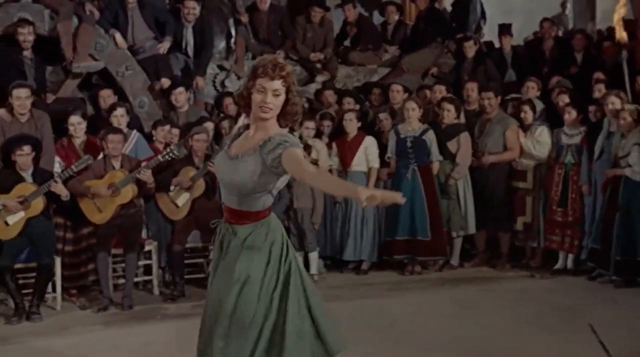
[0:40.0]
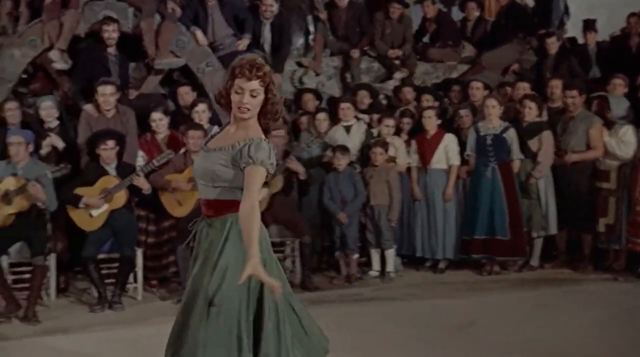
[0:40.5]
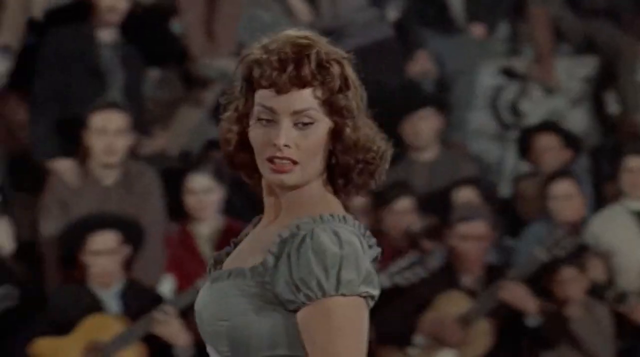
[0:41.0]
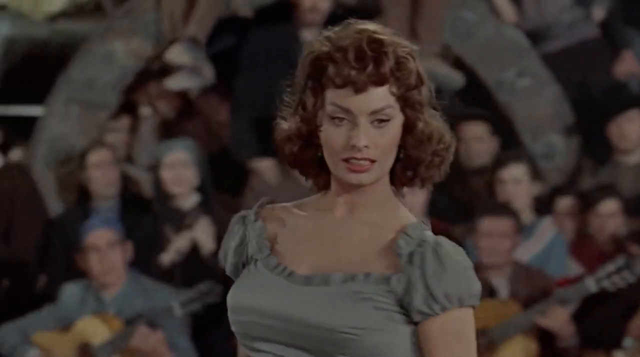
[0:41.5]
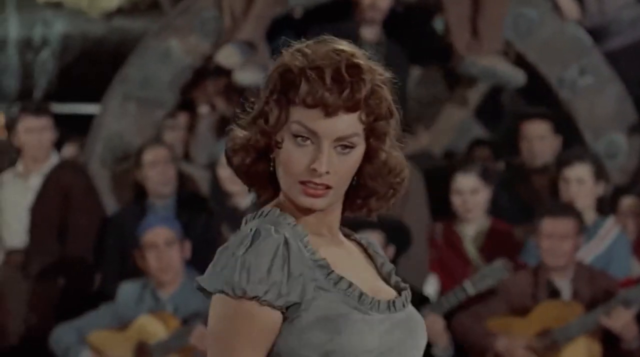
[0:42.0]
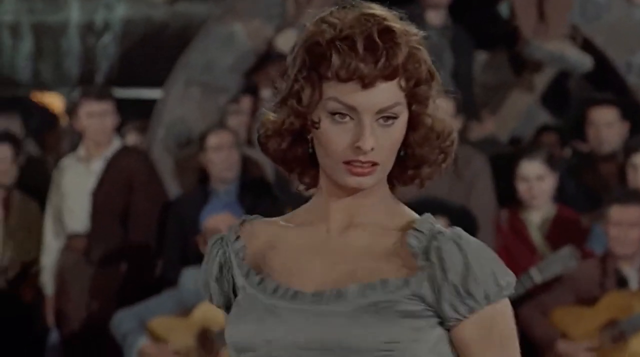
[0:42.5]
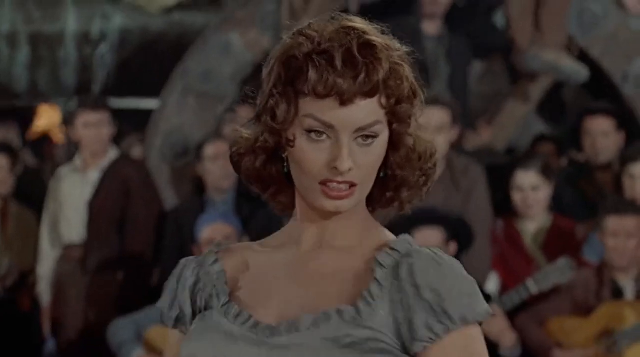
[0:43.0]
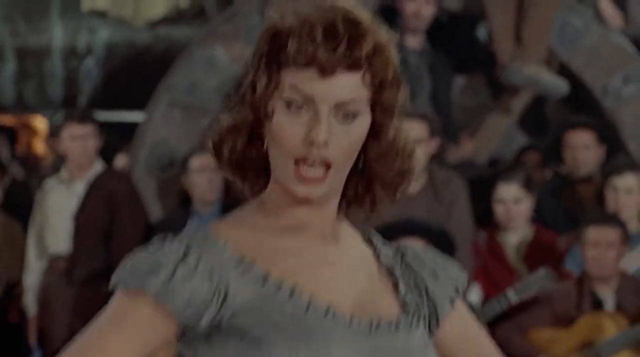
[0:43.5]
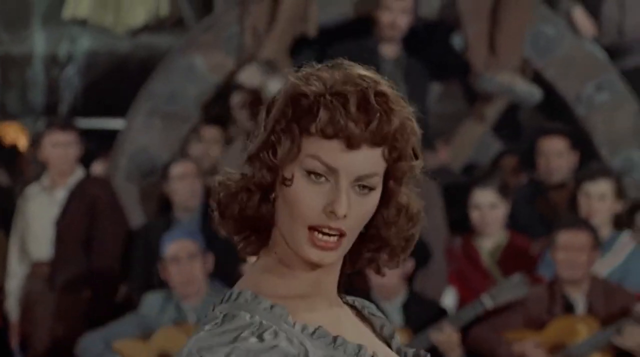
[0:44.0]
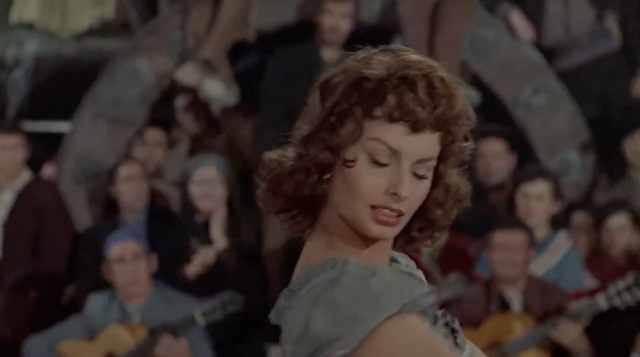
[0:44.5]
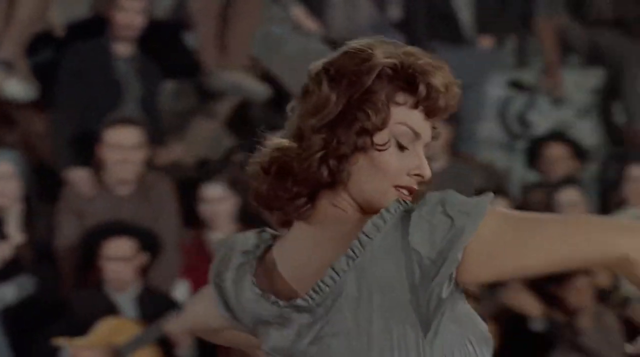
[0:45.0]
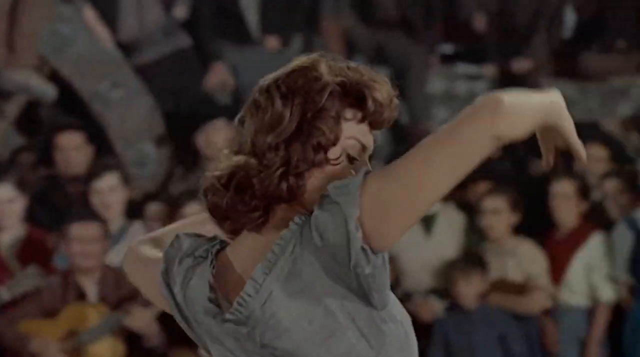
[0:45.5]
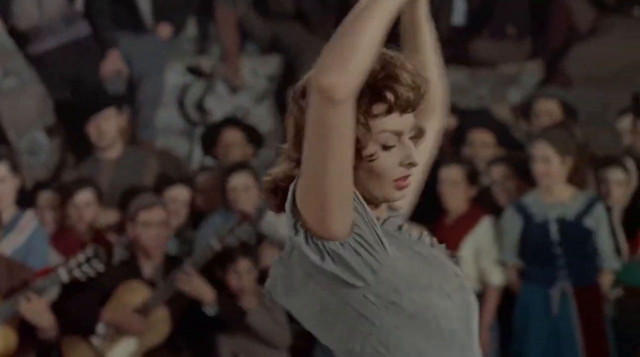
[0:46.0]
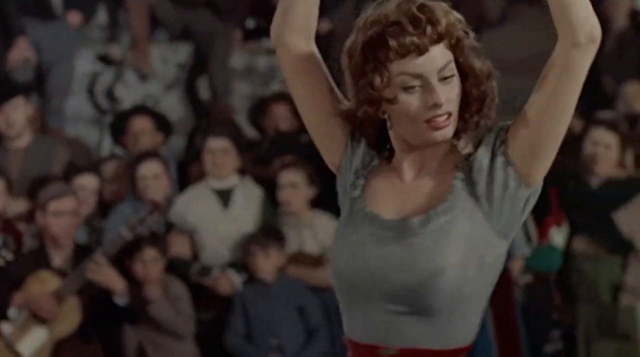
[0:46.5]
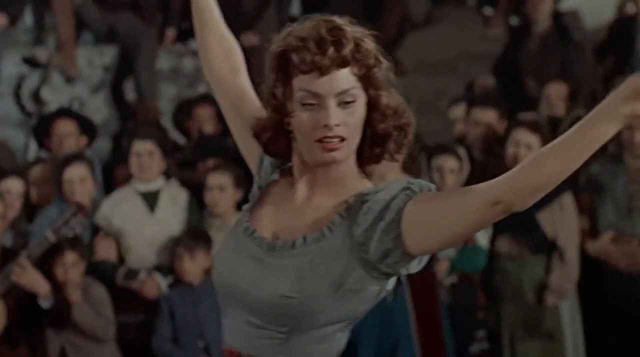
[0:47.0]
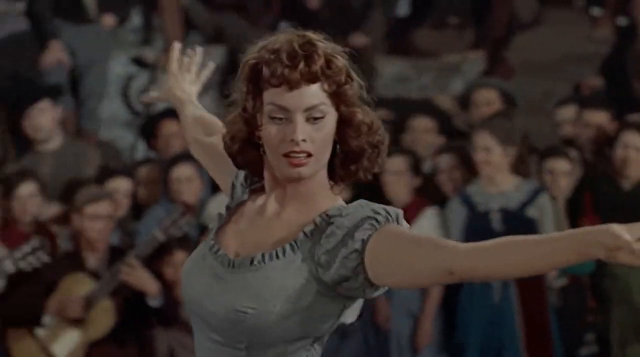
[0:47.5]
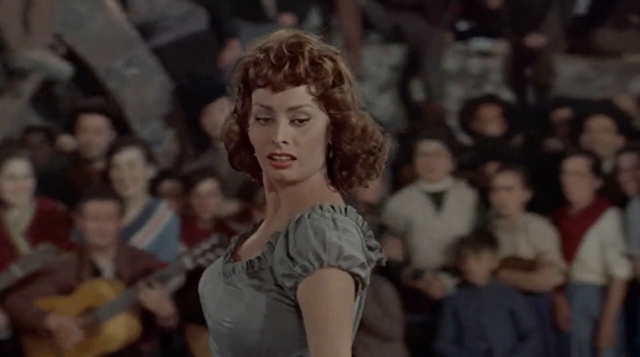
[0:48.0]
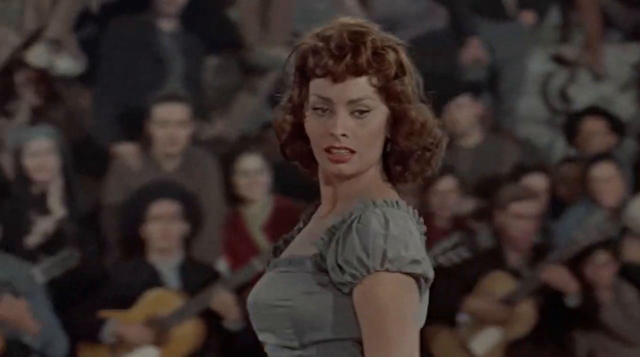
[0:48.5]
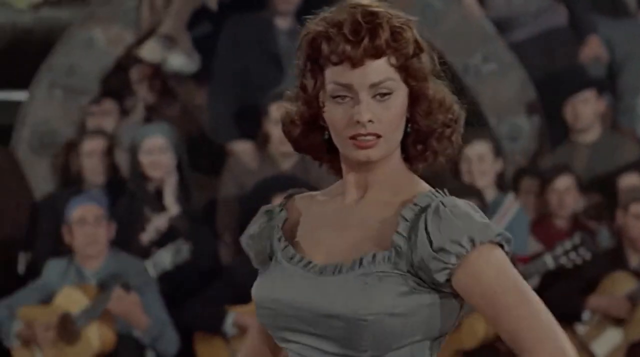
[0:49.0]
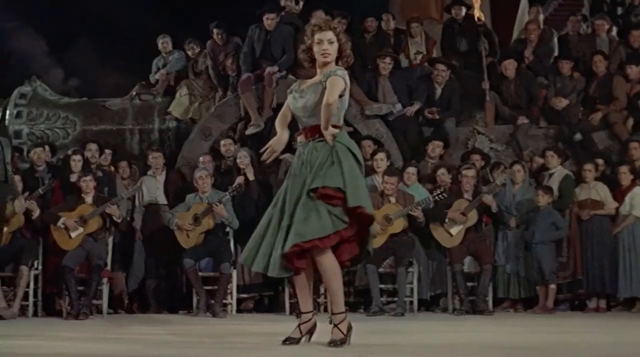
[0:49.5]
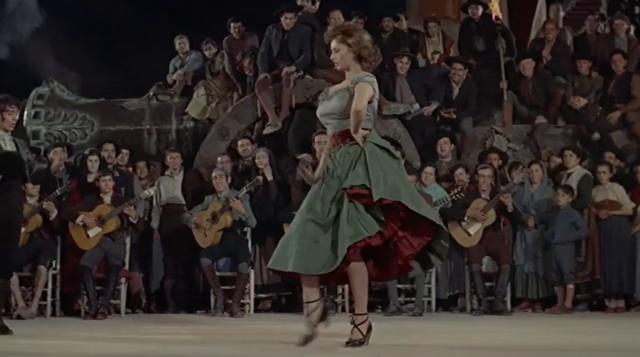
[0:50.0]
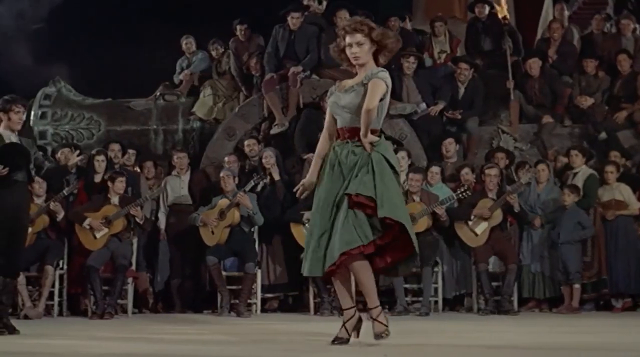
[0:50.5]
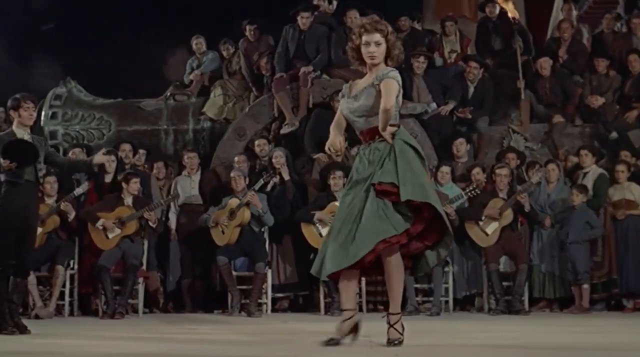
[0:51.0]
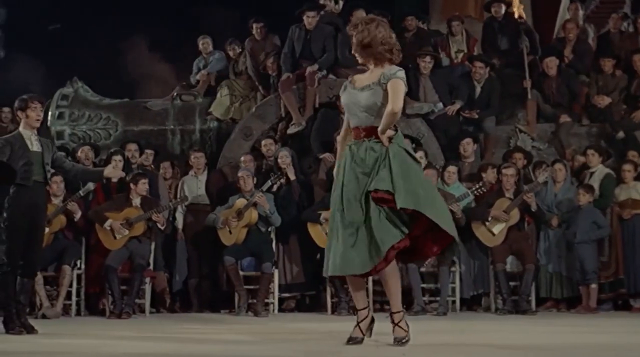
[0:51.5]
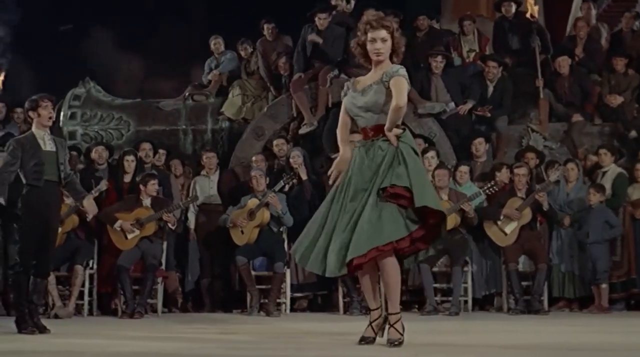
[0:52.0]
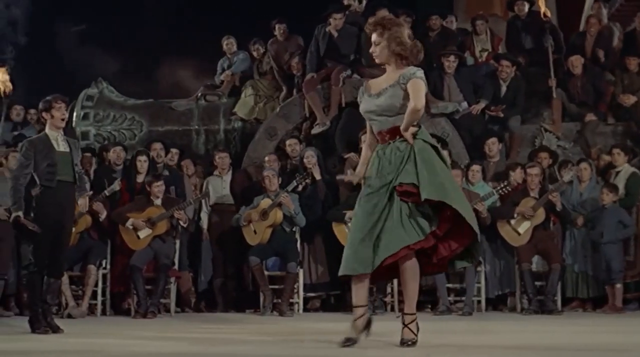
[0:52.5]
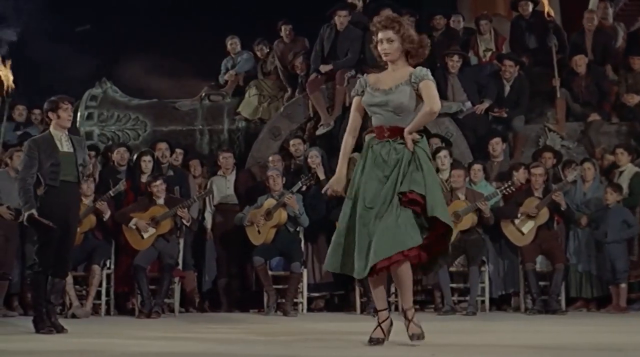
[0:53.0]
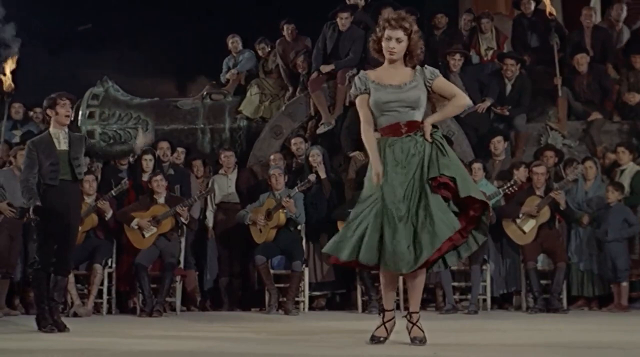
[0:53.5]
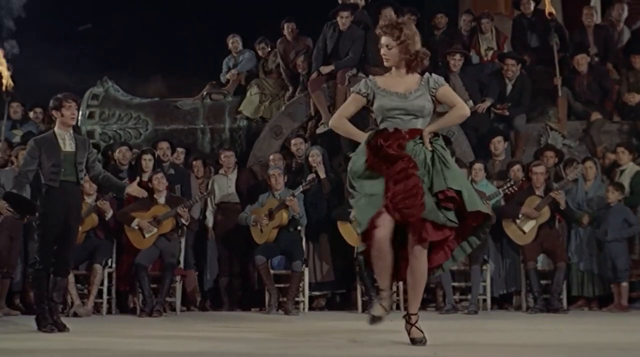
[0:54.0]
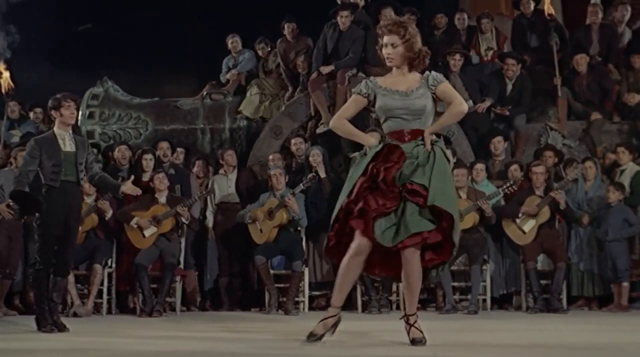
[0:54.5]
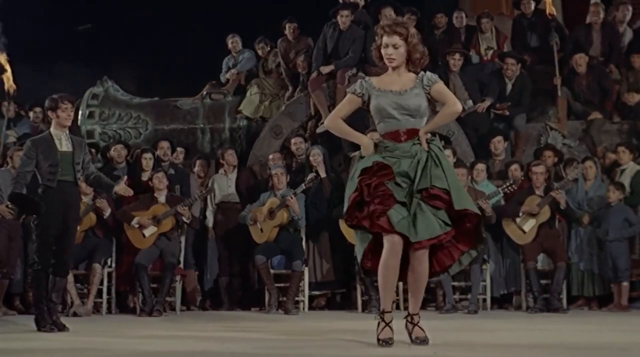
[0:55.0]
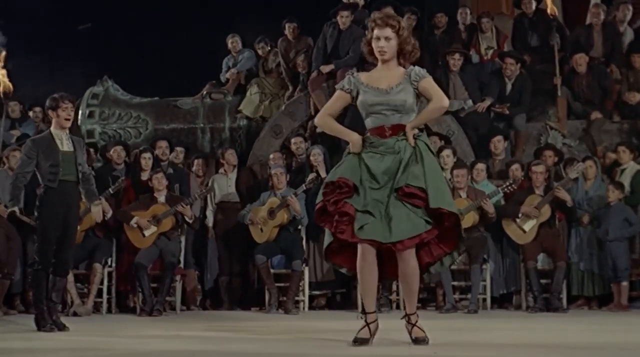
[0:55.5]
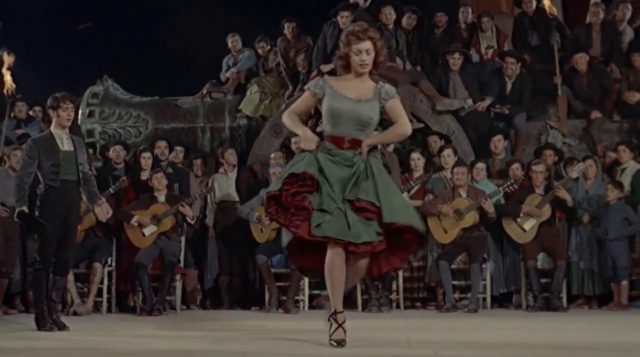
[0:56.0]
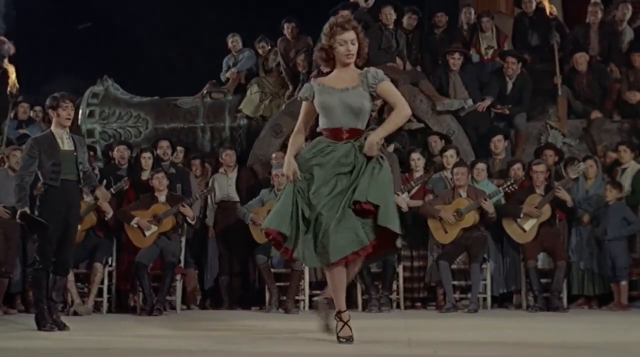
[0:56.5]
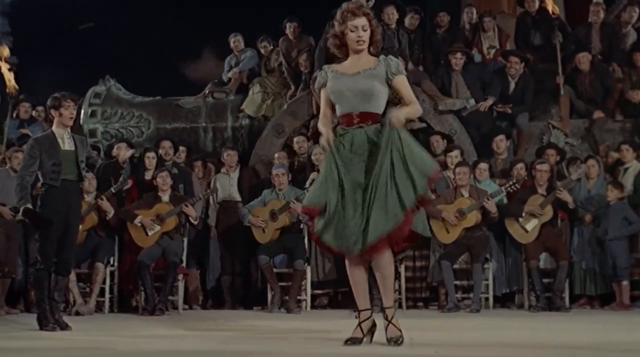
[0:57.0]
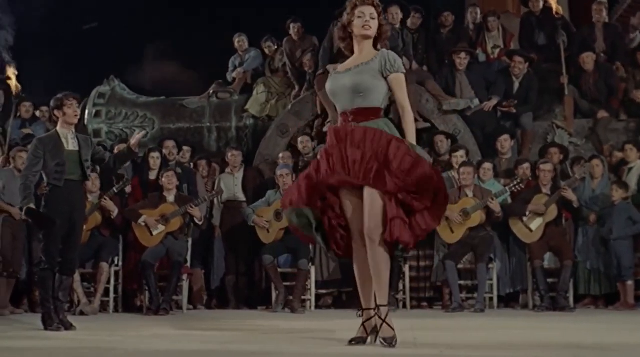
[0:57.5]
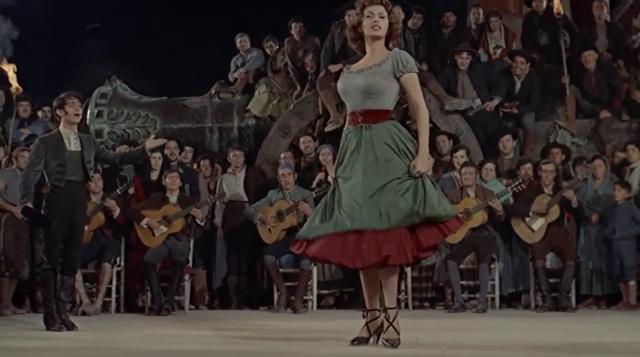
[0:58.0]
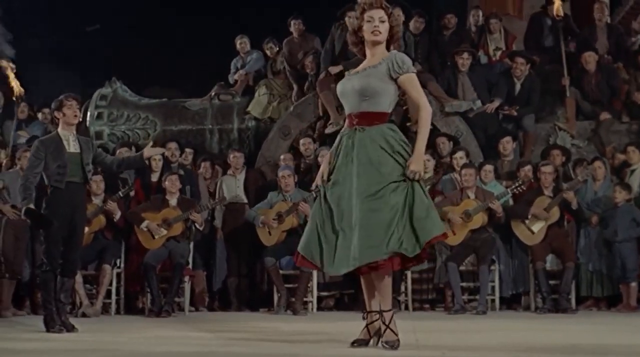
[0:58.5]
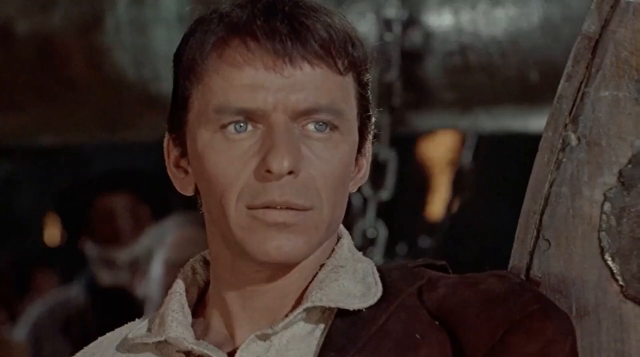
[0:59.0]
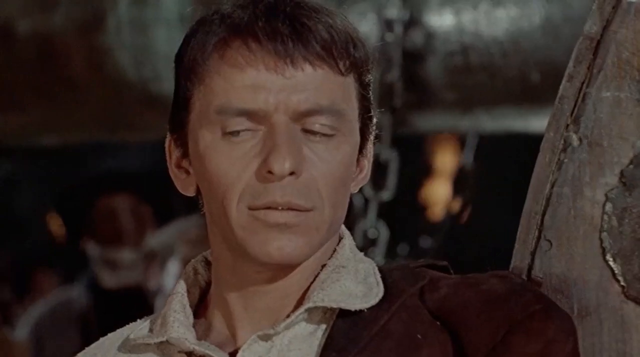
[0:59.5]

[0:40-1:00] The woman continues dancing some kind of flamenco-esque dance. The musicians are seated with their guitars, and one of them wears a hat. A few people in the audience wear hats and some do not. The colours throughout are fairly dull: there are reds, blues, whites and browns, but none are particularly bright. It appears to be an older film, seemingly also set in the past. The woman plays to the camera, showing a flirty side, and plays to the audience too. The other man in the audience is flirting with her, mostly with his eyes. At the very end, the woman's partner is shown, and the look on his face shows he is not happy.